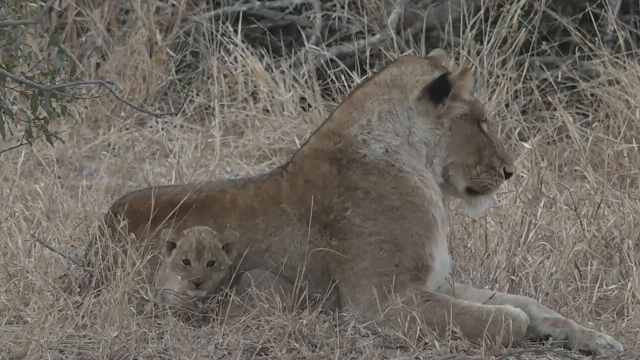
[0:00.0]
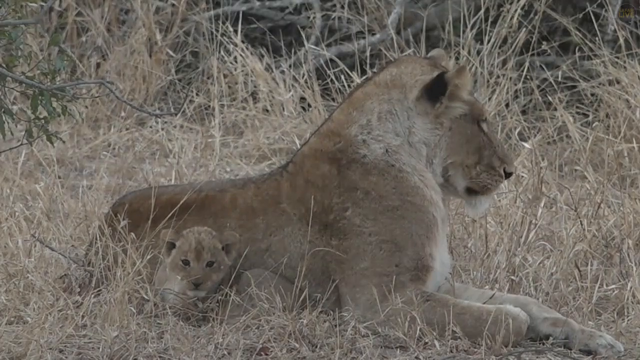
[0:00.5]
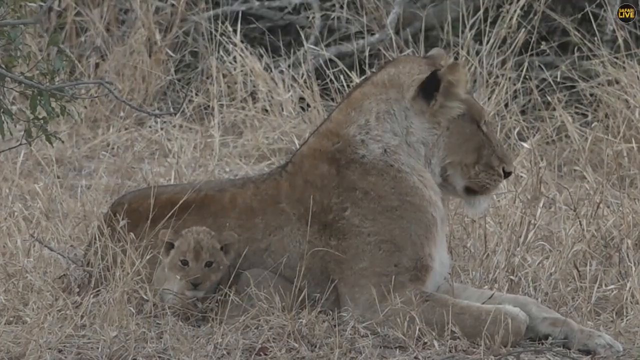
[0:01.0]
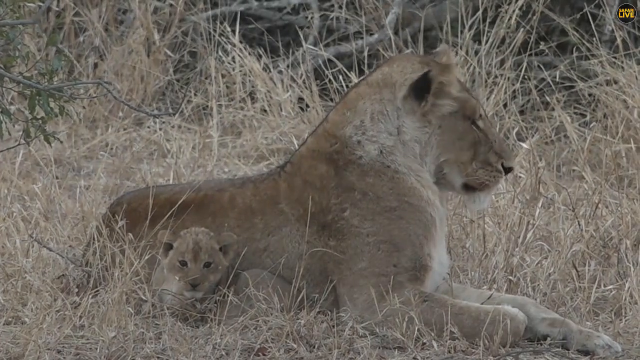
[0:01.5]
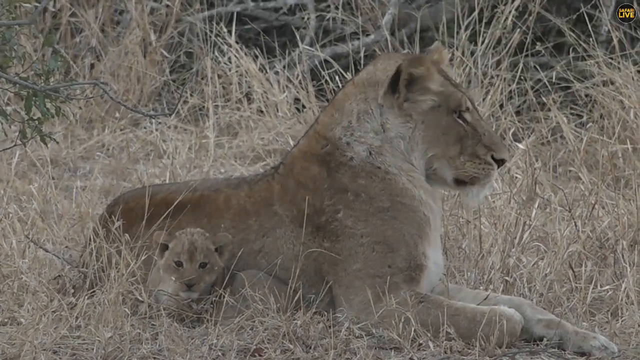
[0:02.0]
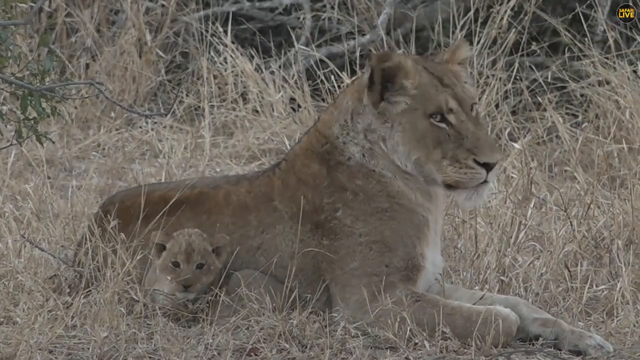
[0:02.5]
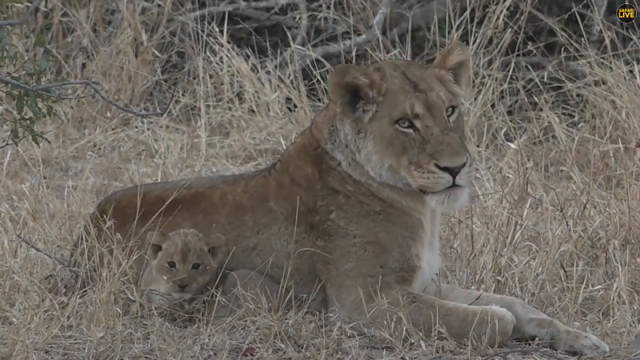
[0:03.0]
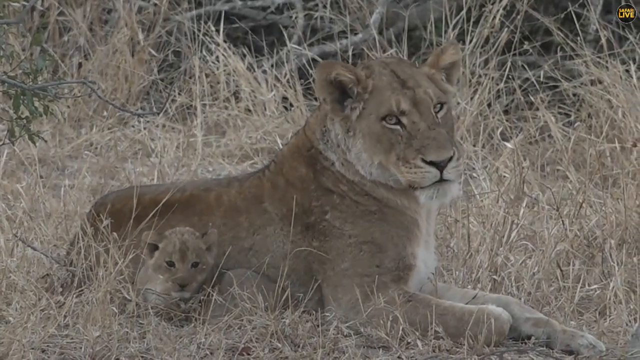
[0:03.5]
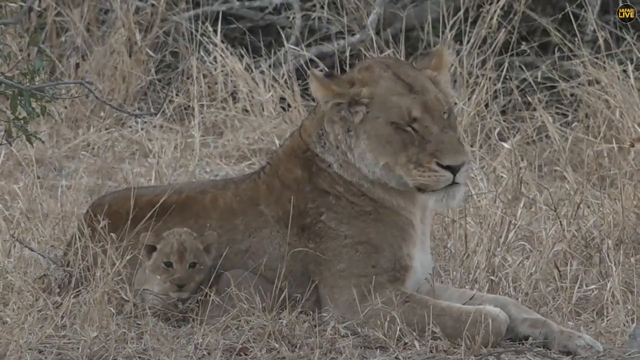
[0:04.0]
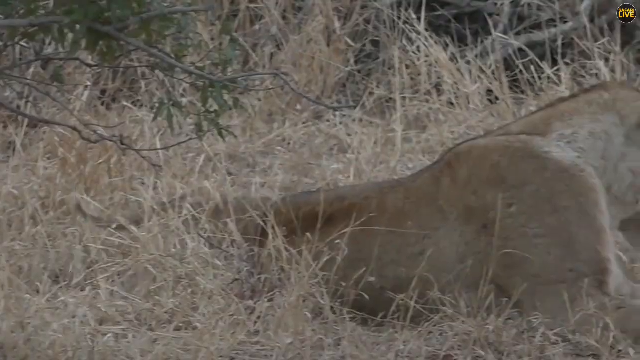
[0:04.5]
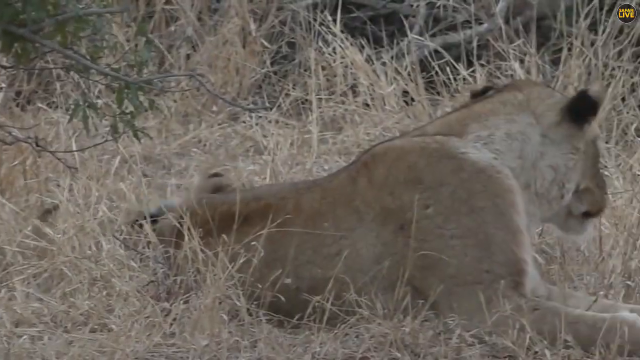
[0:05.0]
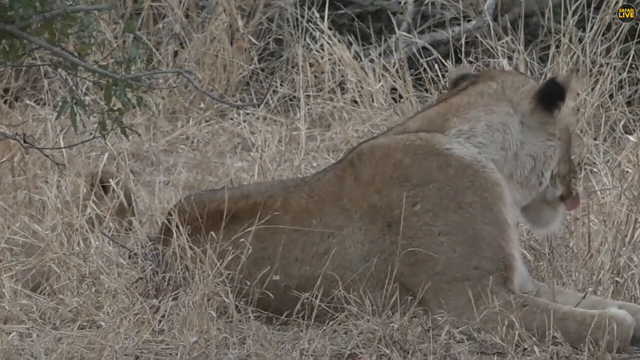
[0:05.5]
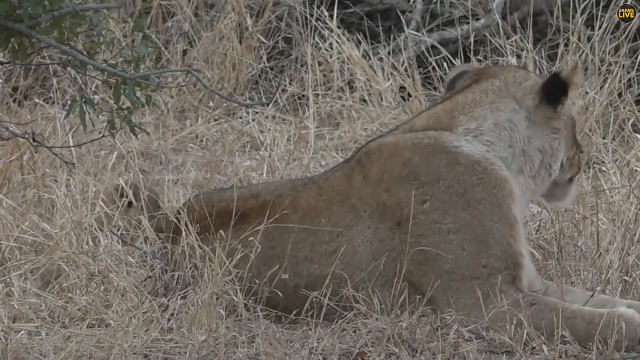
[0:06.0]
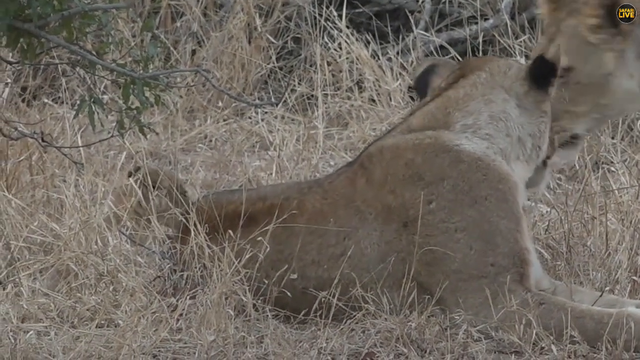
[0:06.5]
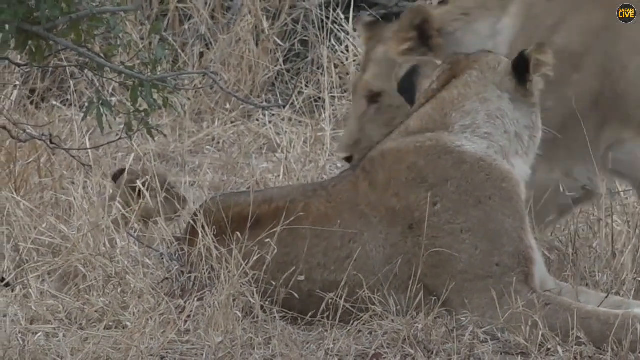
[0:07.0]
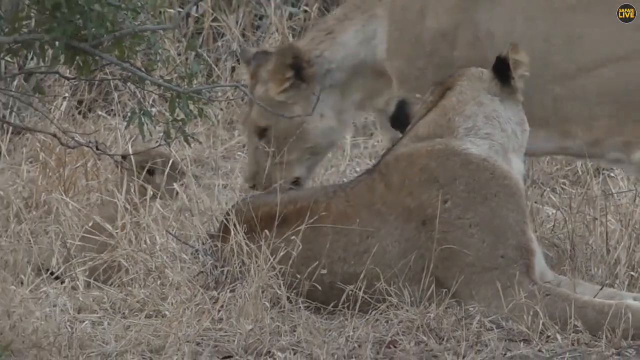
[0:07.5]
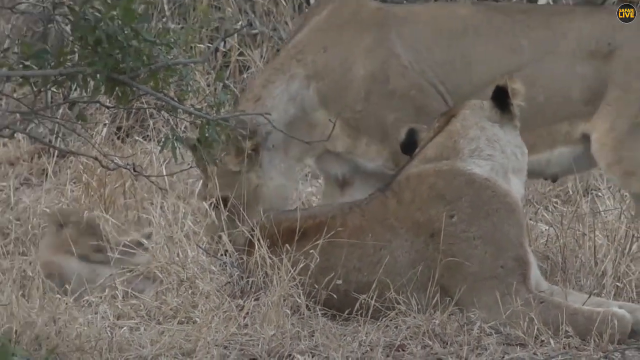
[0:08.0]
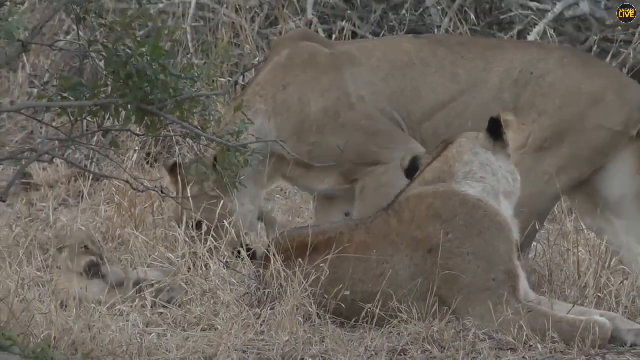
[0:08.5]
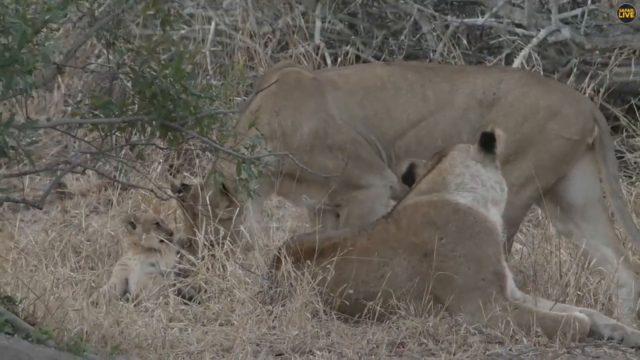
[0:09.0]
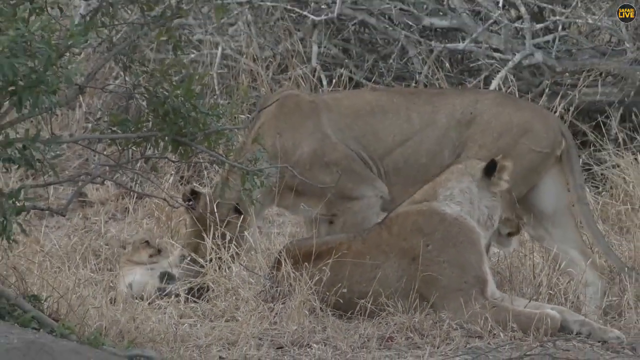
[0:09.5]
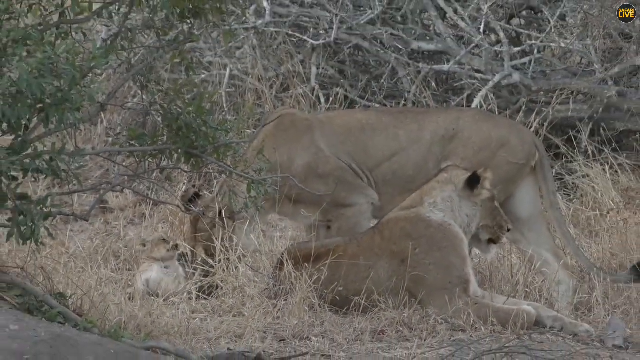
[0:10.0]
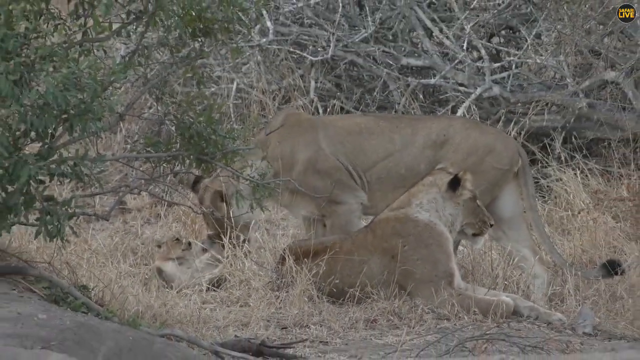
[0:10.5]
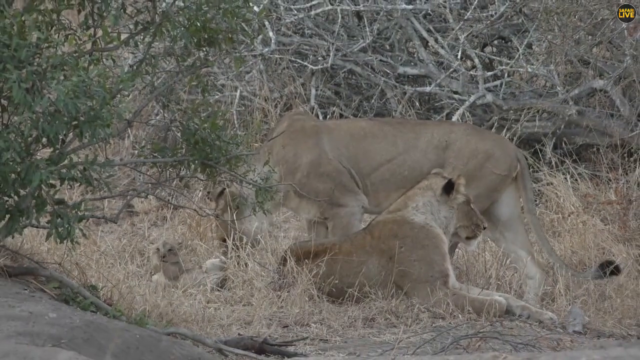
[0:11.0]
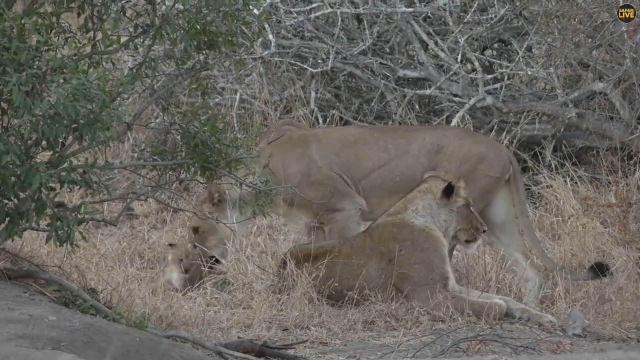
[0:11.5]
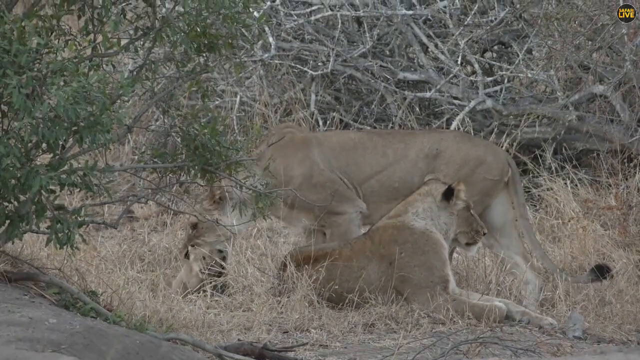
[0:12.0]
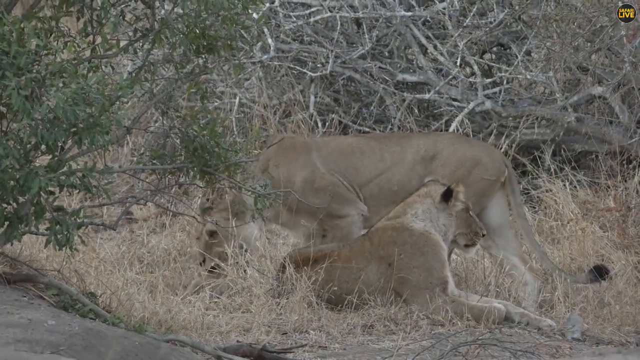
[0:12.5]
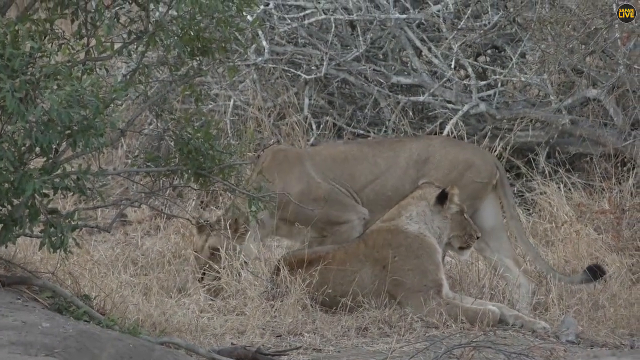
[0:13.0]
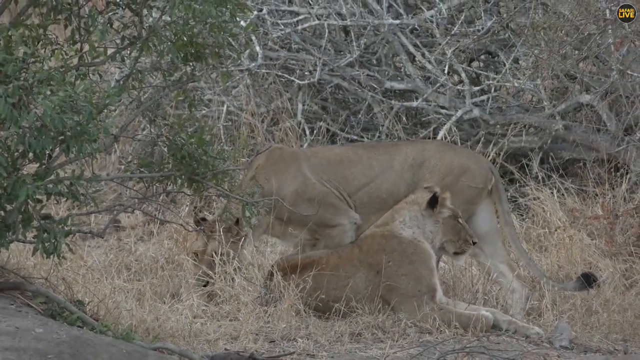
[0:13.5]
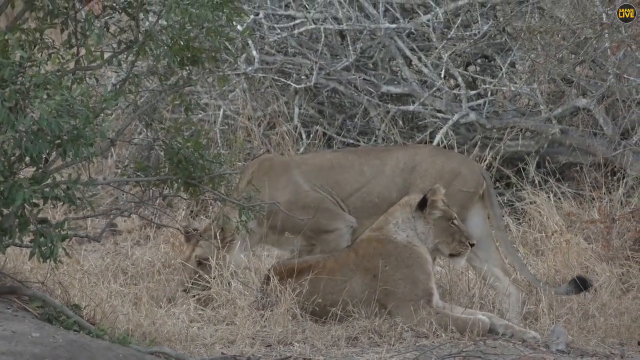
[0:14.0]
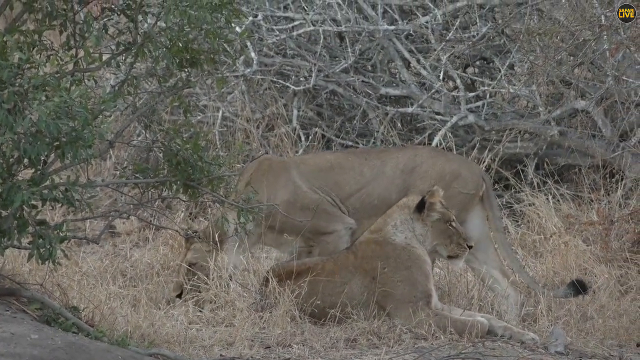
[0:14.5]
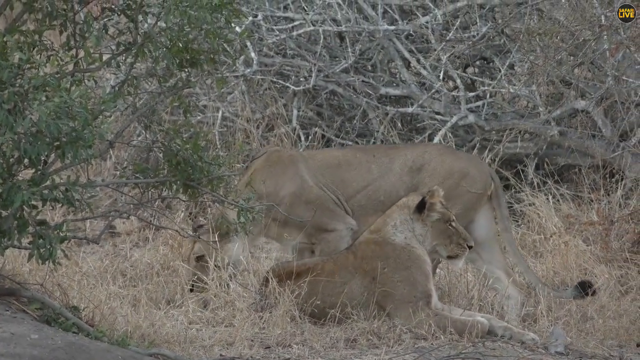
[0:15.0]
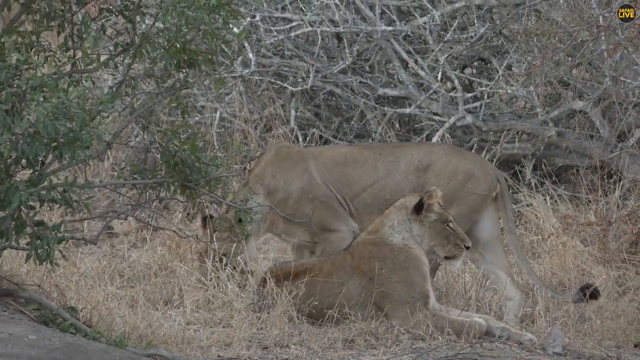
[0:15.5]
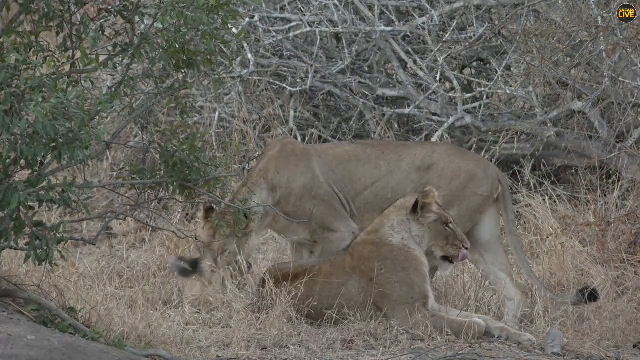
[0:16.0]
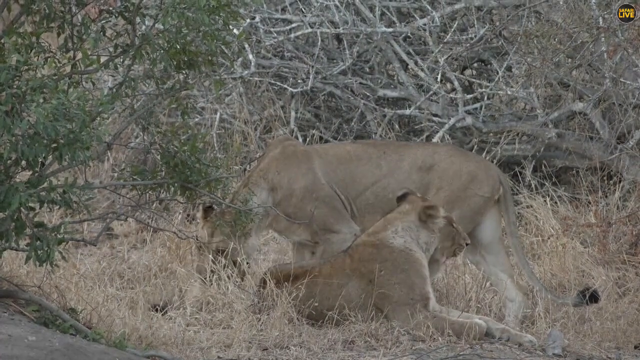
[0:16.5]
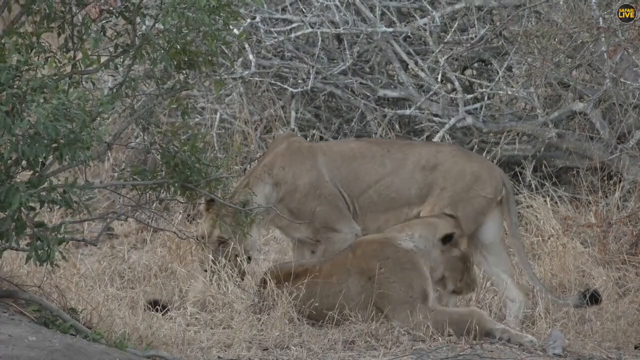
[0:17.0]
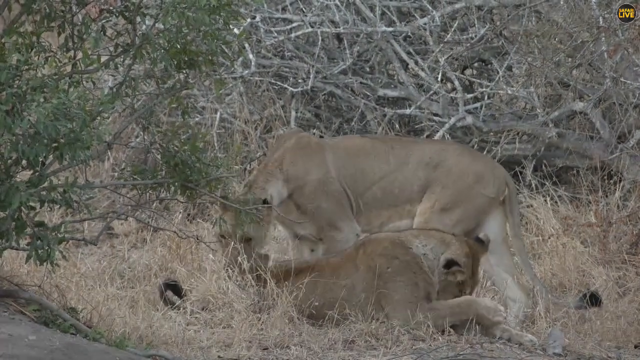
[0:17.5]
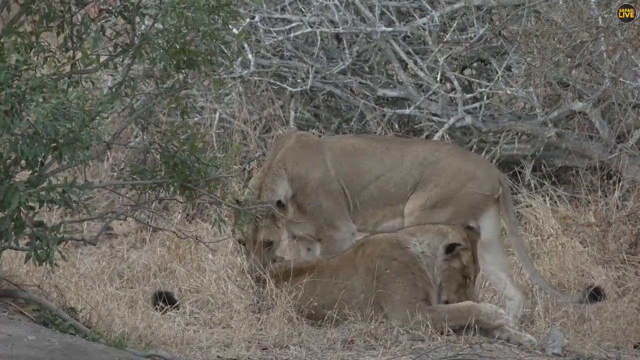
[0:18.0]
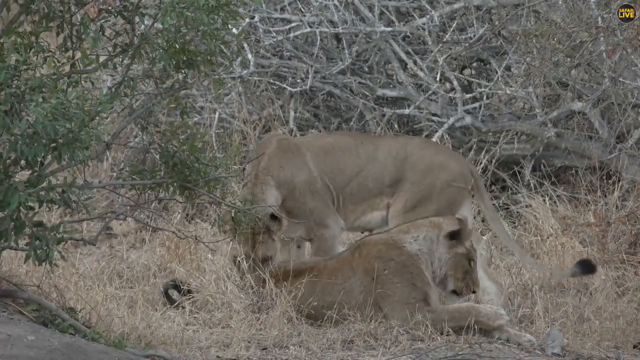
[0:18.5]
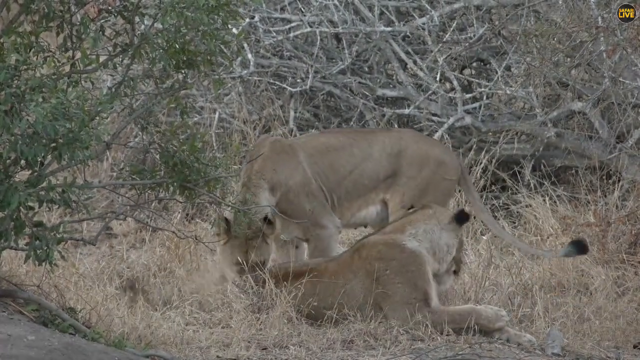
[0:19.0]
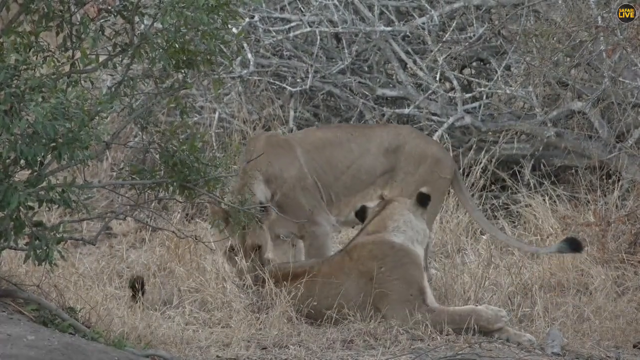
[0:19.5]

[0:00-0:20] A female lion lies on the ground in what looks like some kind of savannah. She is not facing the camera; her body is seen from the side, in profile. Her right ear flickers and her eyes are kind of closed. Tucked next to her side is a cub, a baby lion, looking directly at the camera. Her right ear continues to flicker, then she turns her head to the right and makes eye contact with the camera before starting to turn away. The shot cuts, and the female lion is now seen from the back, still on the ground. The cub is sitting on her back area, and another lion walks up and starts chewing at the cub.